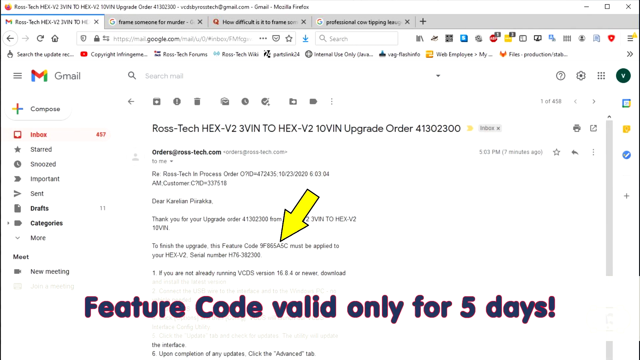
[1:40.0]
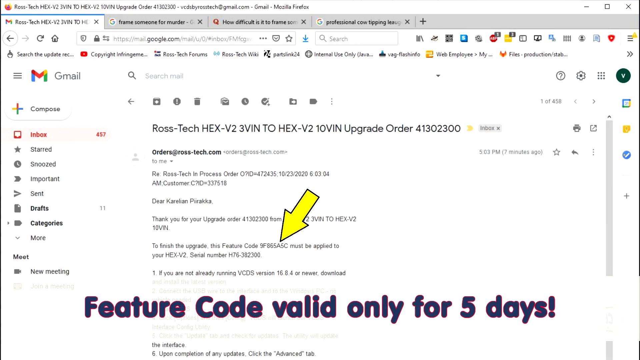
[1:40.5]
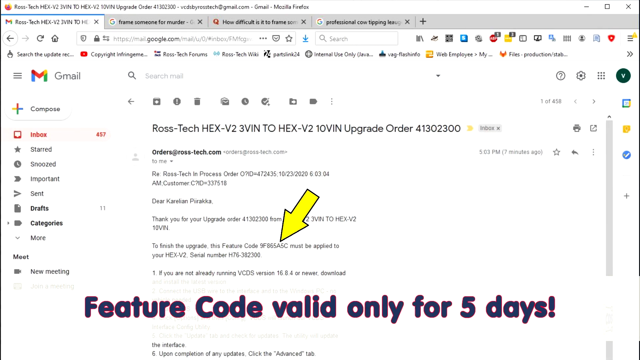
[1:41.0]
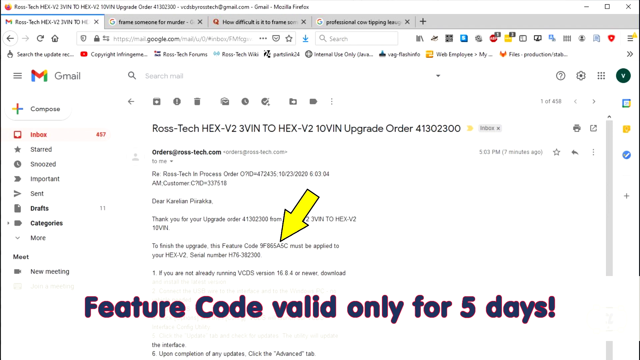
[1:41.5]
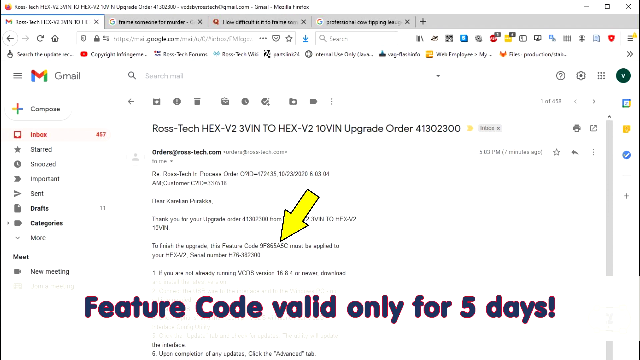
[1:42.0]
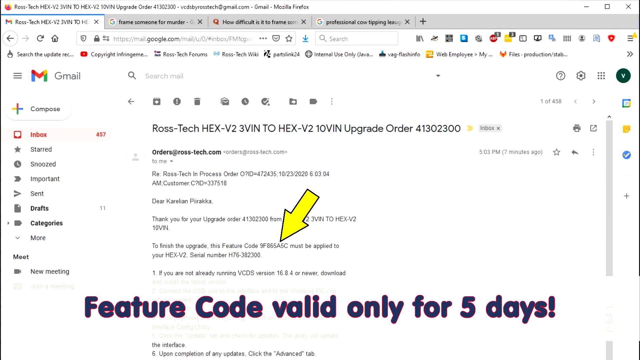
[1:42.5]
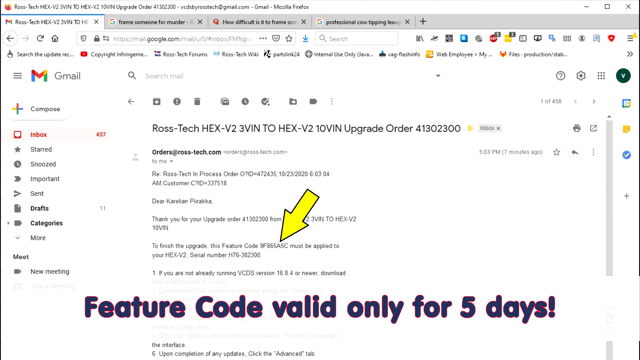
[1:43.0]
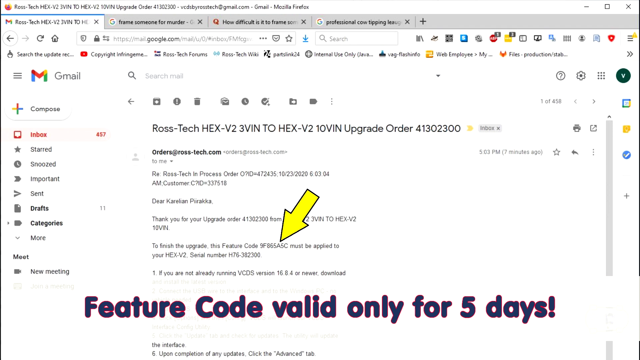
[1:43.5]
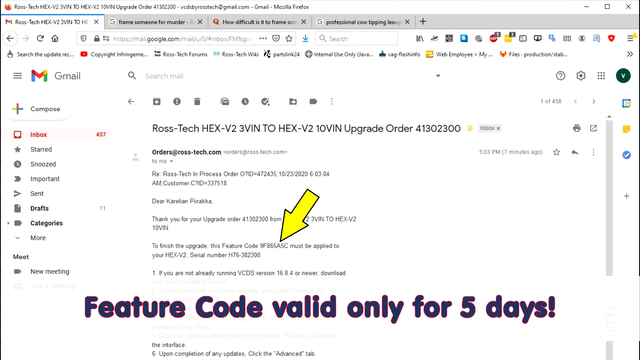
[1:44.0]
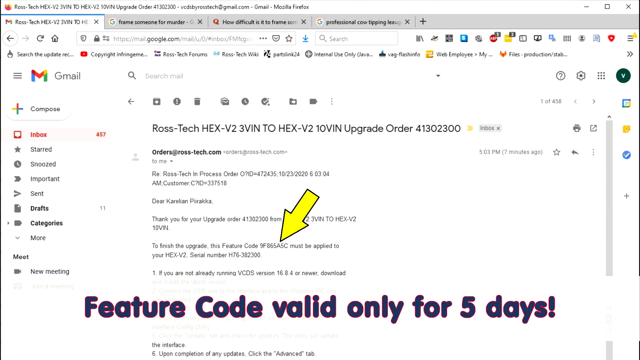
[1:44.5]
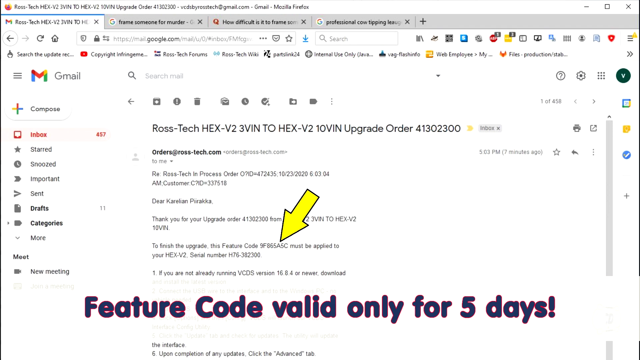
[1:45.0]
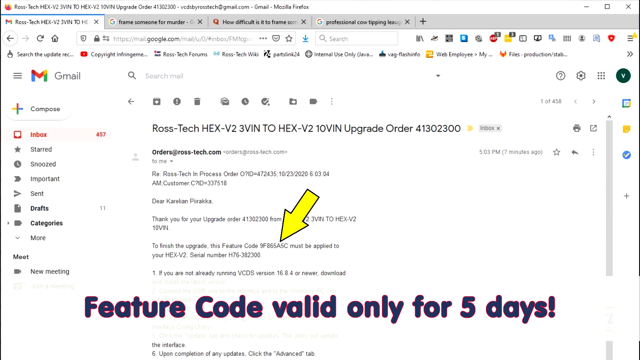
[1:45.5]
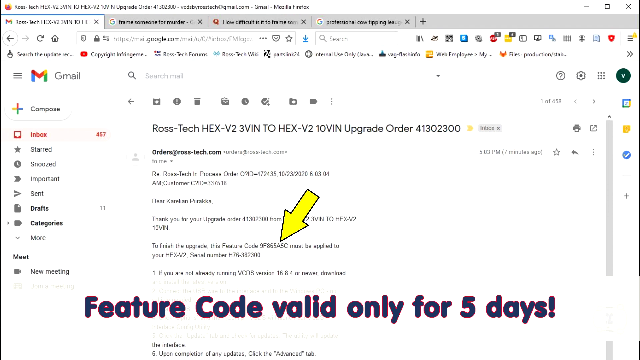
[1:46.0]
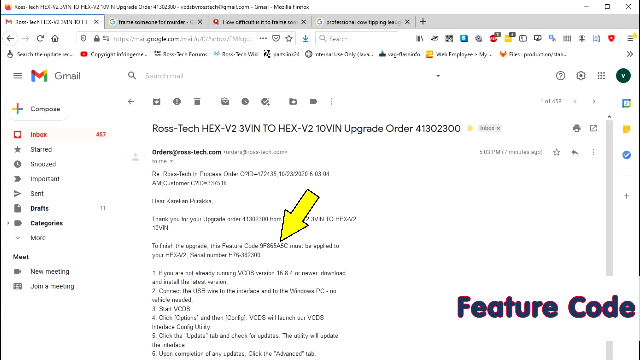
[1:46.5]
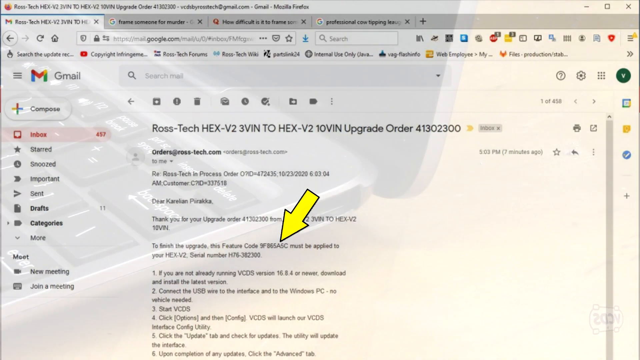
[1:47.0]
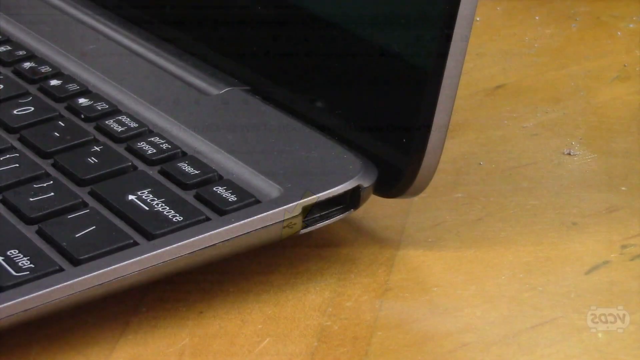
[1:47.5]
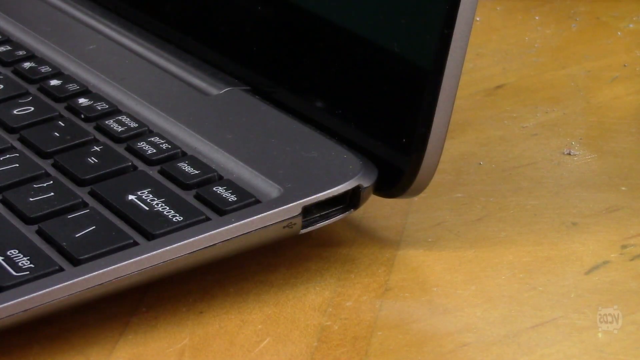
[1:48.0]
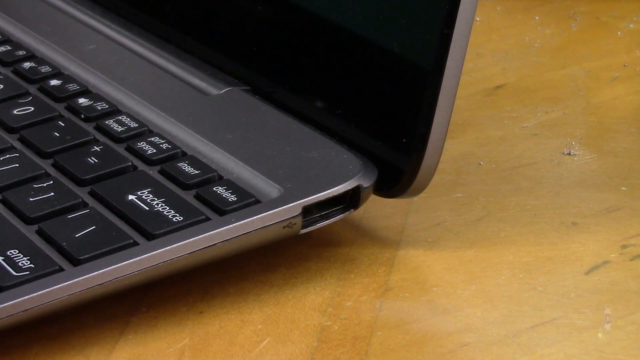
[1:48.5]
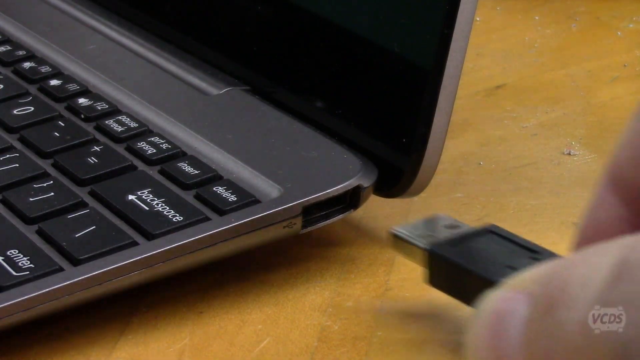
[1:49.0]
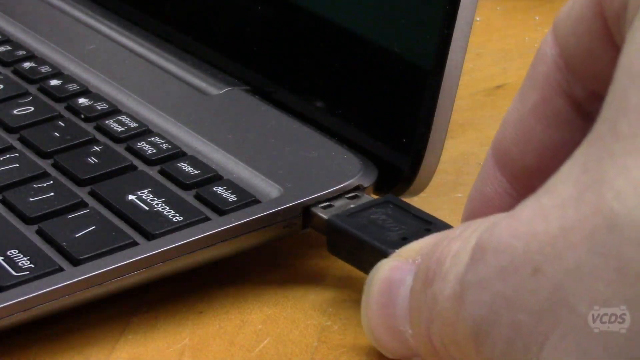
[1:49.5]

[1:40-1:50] A computer monitor shows a number of tabs, with the open one for Ross Tech in a Gmail account. The open email reads in black text "Ross Tech hex V2 3VIN to hex V2 10VIN upgrade, order number 41302300," with the orders at rosstech.com email address below. A bright yellow arrow points to upgrade information, and then the image slides to switch. Bold text at the bottom of the screen mentions the feature code being "valid for only five days." The scene then changes to a brown desktop with the right-hand corner of an open laptop. A hand, which appears to be the right hand, puts a charger into the laptop.